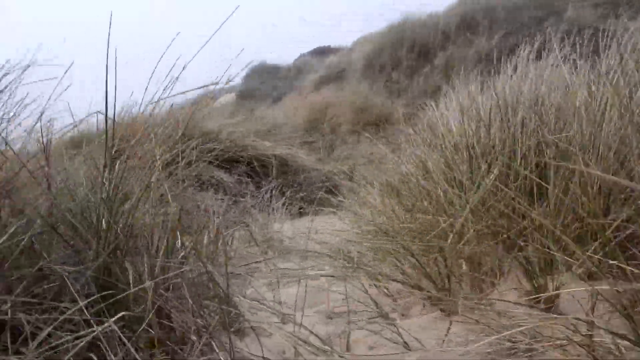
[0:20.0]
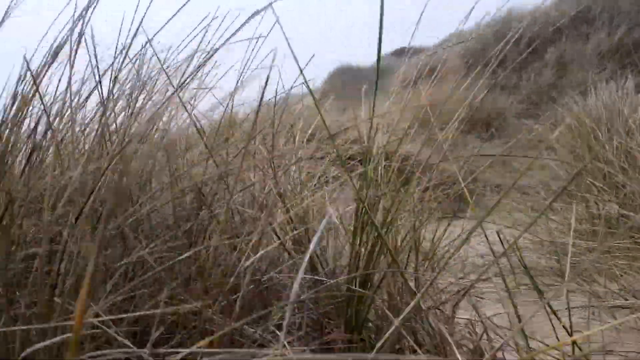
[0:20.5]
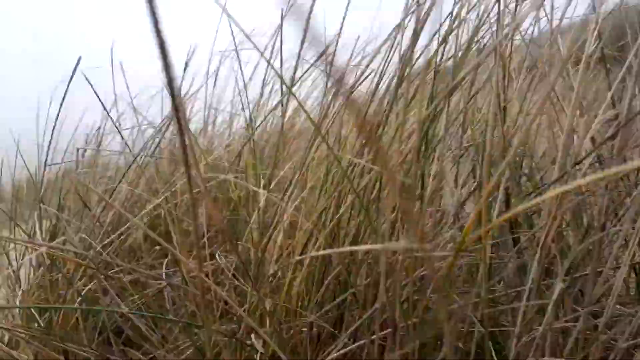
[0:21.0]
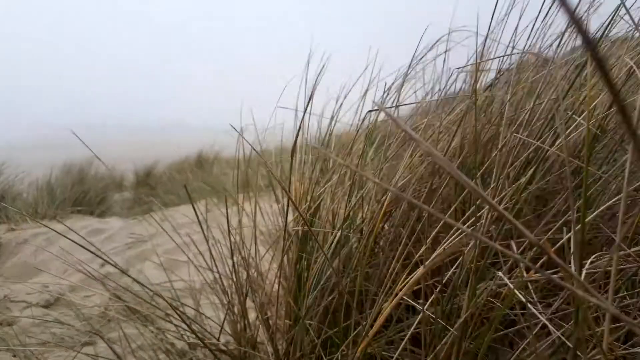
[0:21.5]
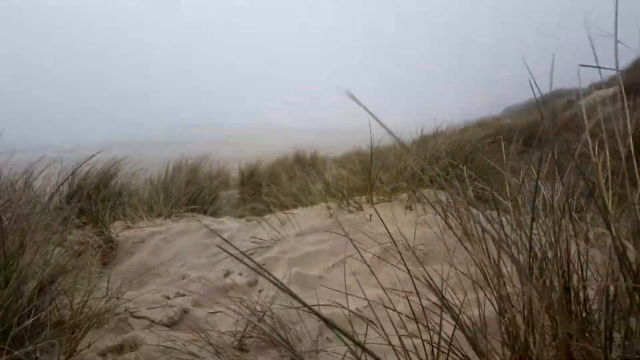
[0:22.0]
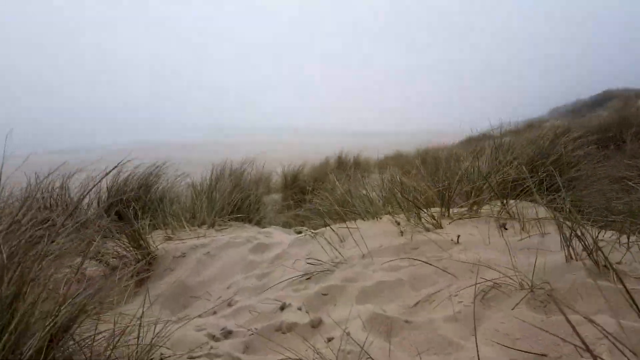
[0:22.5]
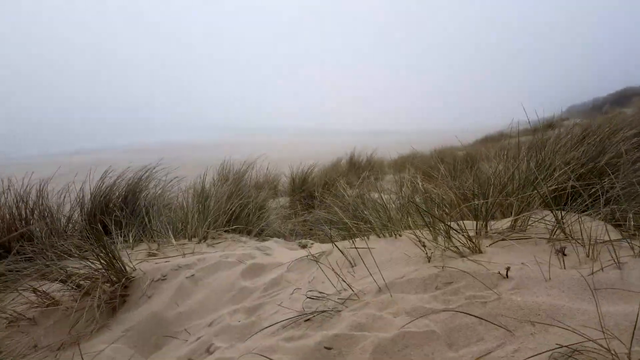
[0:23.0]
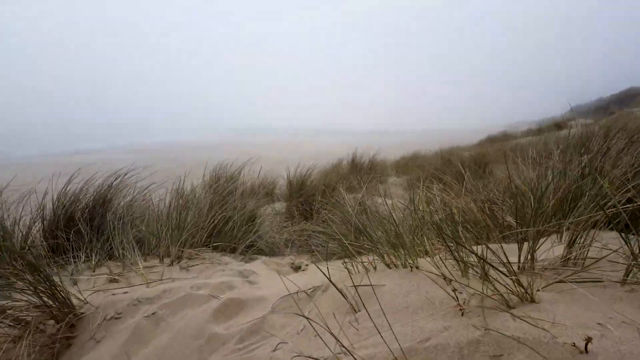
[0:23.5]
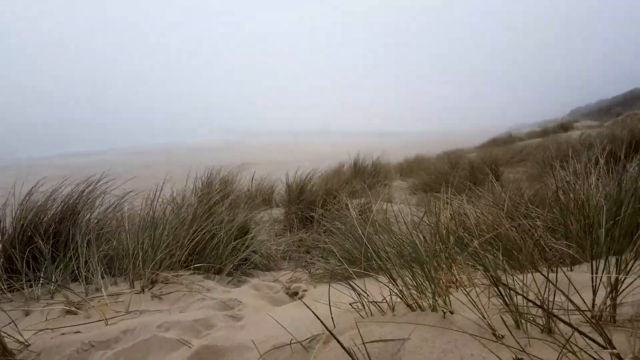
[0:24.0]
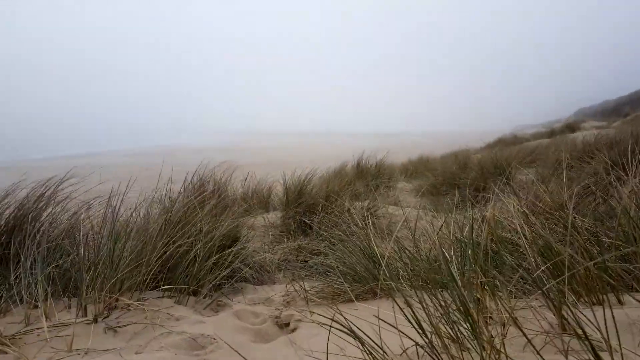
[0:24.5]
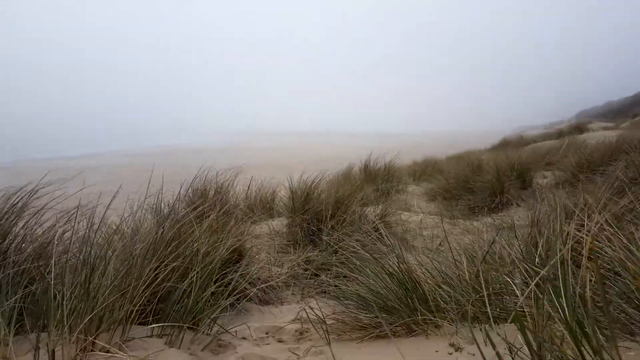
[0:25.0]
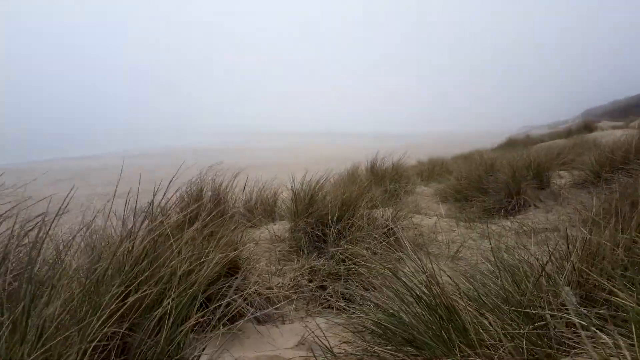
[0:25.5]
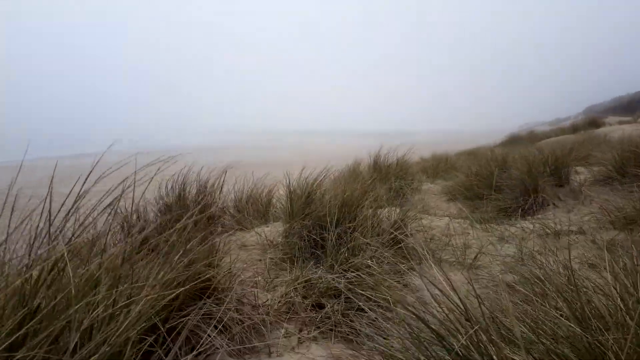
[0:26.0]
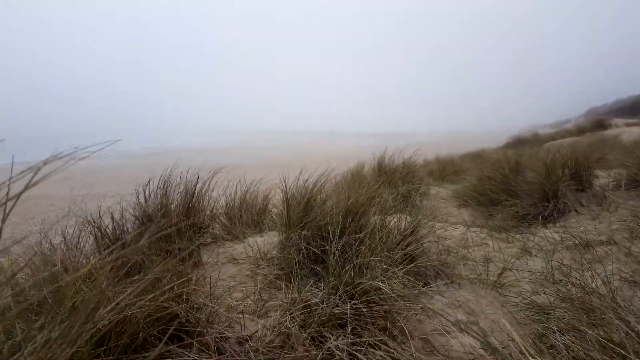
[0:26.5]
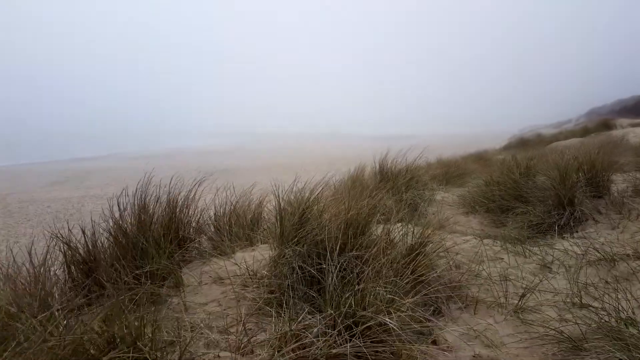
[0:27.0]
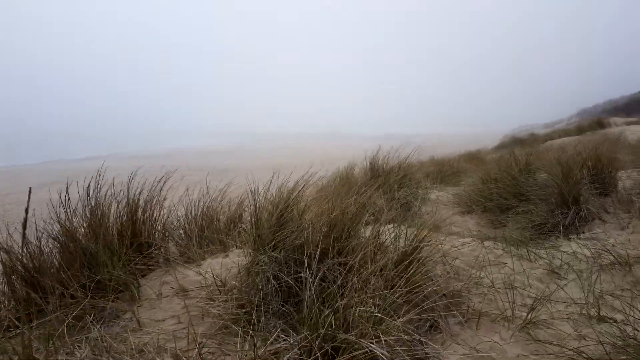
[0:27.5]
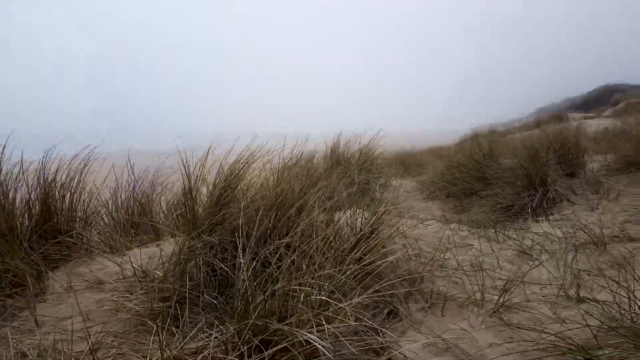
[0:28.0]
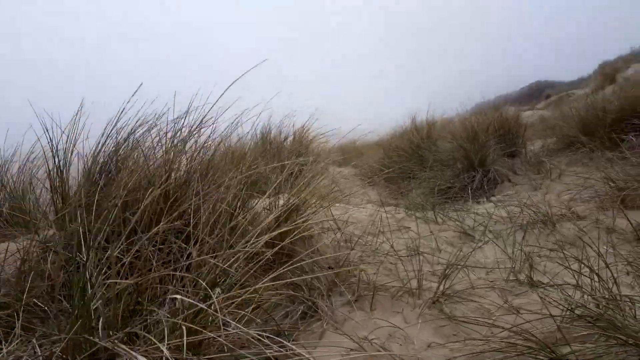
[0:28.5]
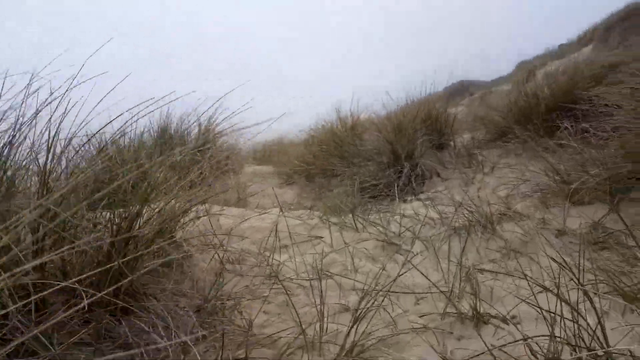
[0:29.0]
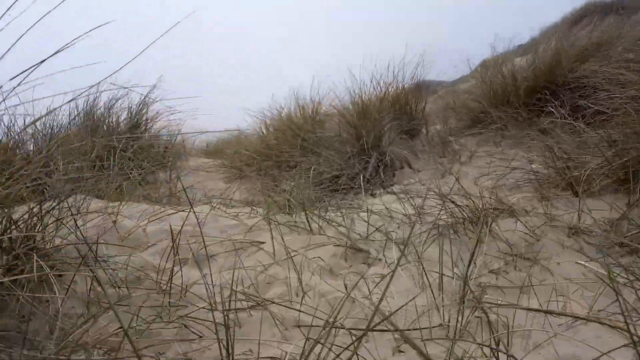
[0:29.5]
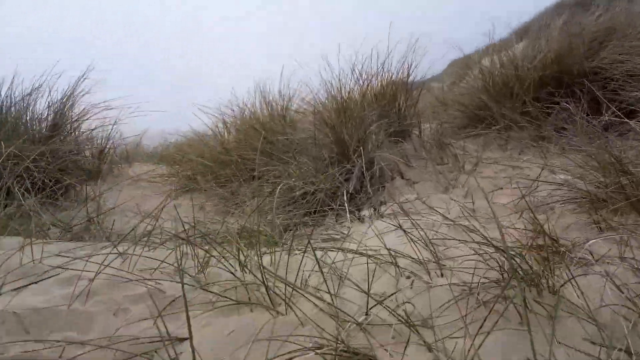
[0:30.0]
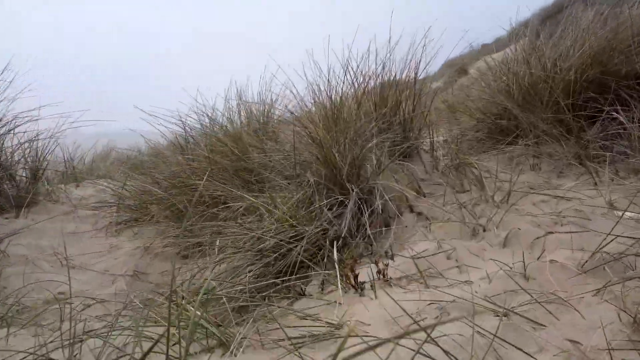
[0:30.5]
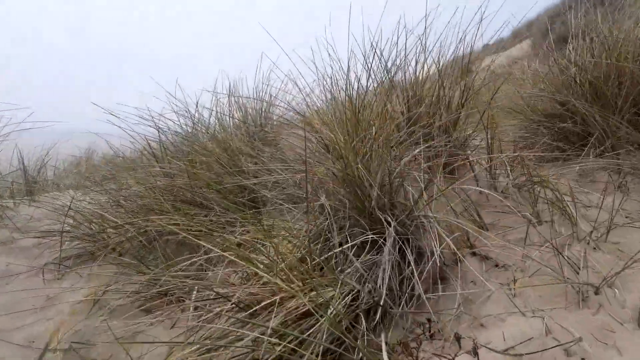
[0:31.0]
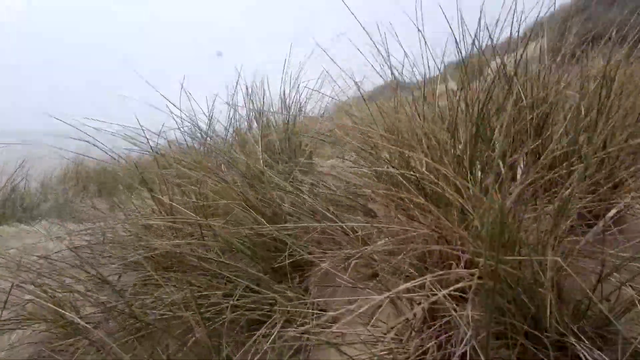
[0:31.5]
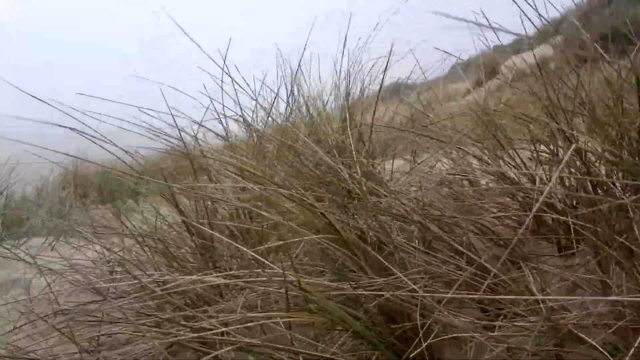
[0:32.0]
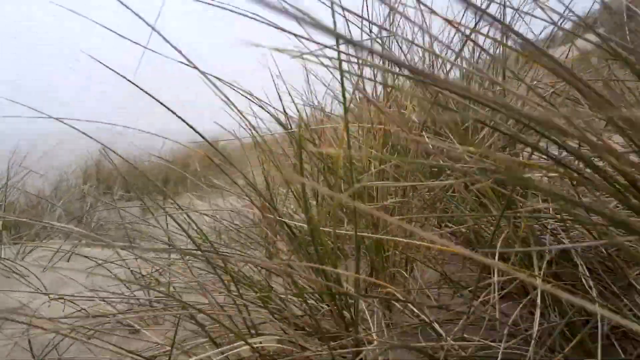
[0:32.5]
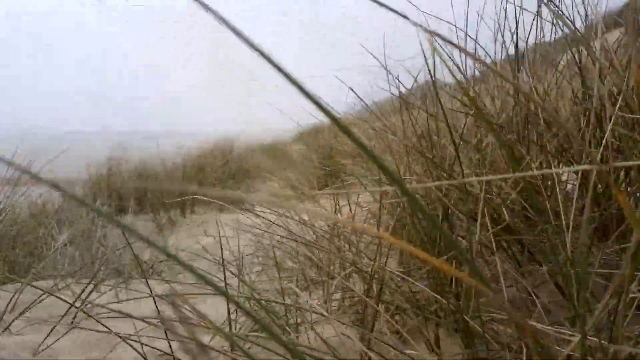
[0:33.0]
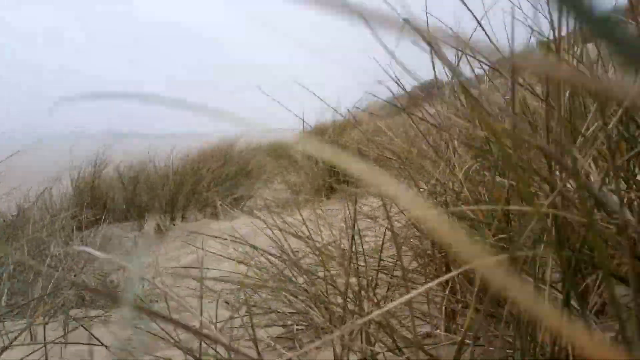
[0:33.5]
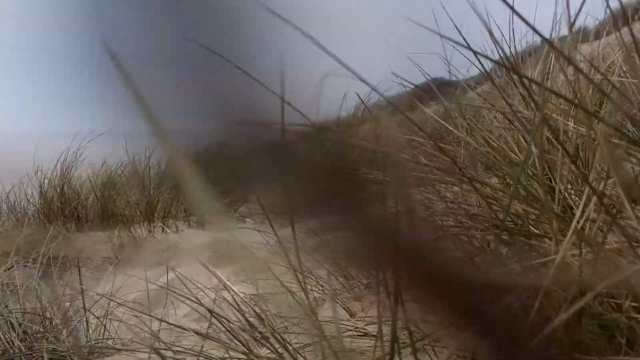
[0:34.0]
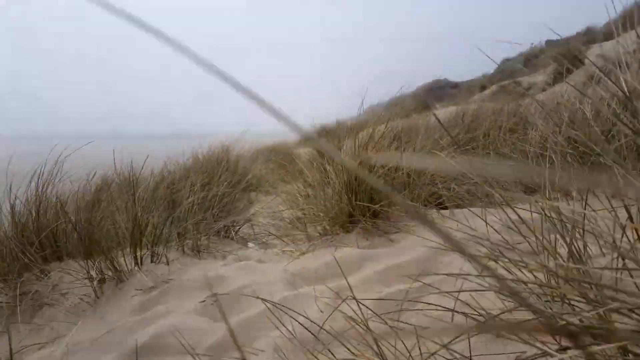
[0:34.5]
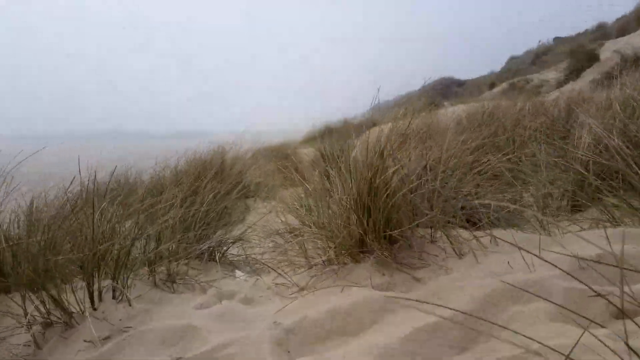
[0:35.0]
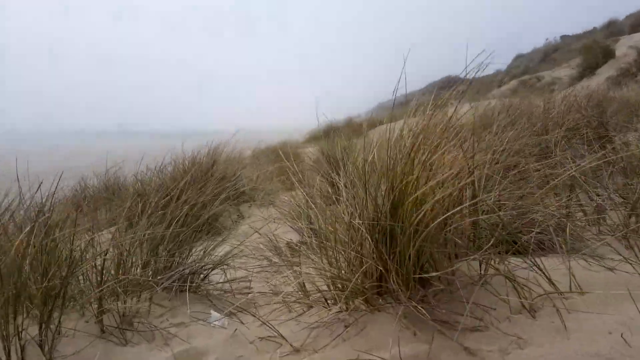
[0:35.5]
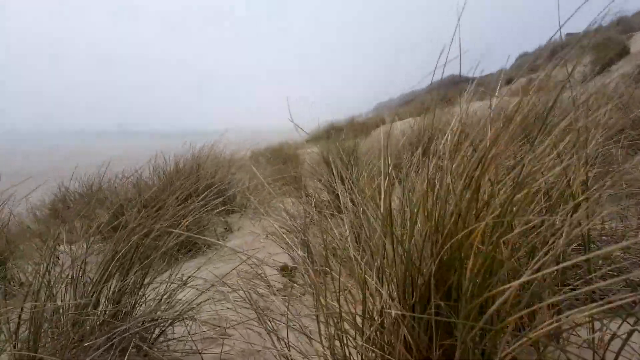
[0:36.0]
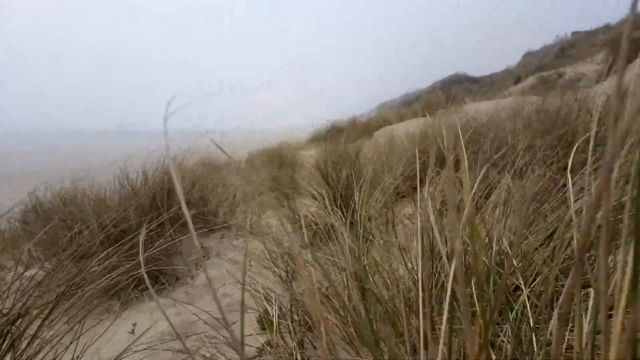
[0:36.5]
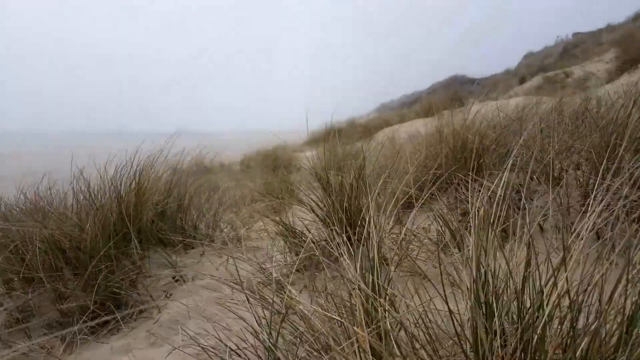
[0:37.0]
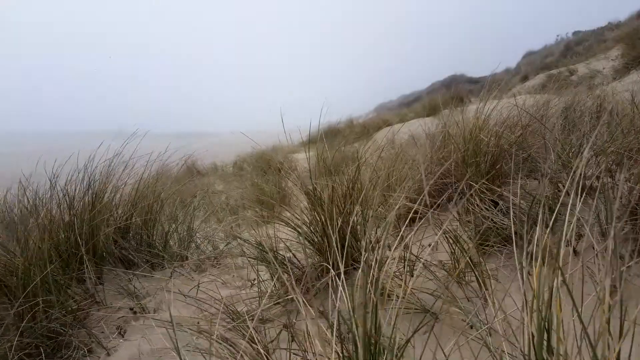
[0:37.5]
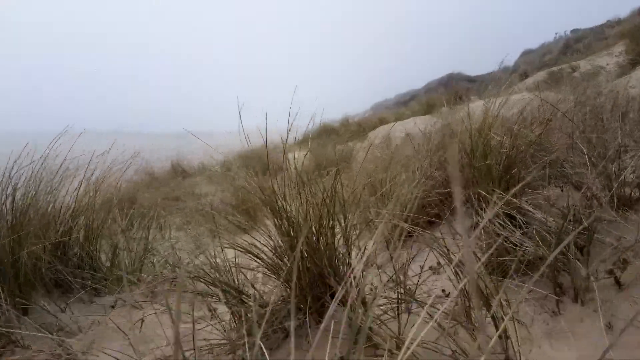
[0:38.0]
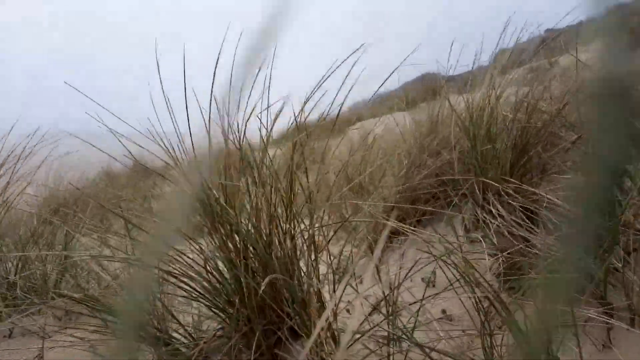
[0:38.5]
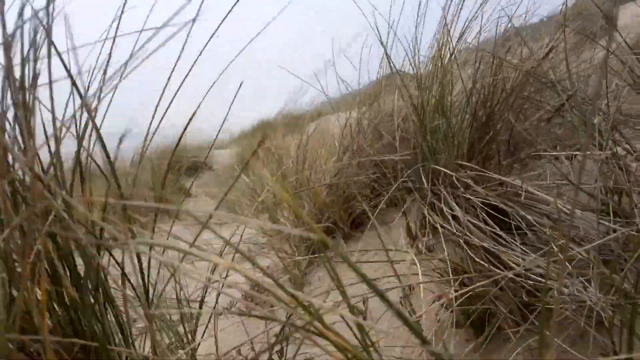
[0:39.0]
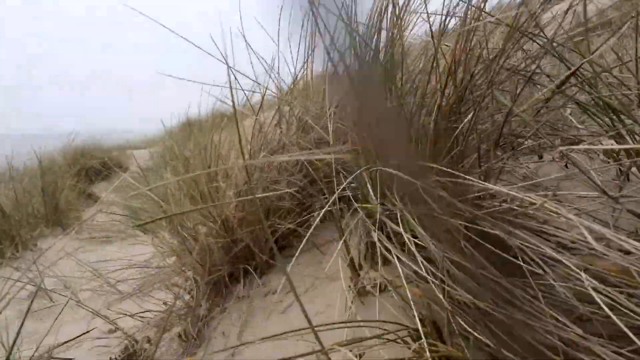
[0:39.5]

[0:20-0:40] The camera moves through dead twiggy bushes on the sandy dune with pretty jarring movement. It pans from right to left toward the sea, floating above the twigs, and midway through it goes through the vegetation. The bushes seem to get bigger, and grass blades, some green and some beige and withered, hit the camera as it traverses the dune crouching or very low to the ground. The sky is very grey, misty and foggy, and little is visible past the dune. A slight wind makes the grass blades sway. The dune is perhaps more covered with vegetation than the valley or the seashore, and there are rough patches with younger grass tufts or walked-on parts with little vegetation and mostly sand, where maybe the wind has covered the vegetation.